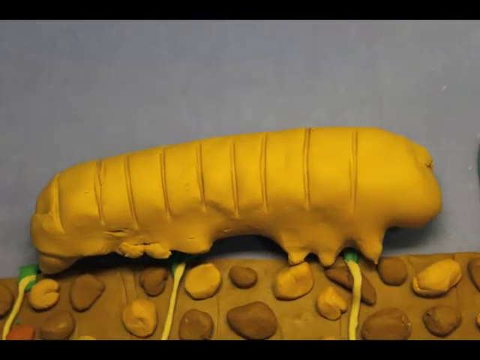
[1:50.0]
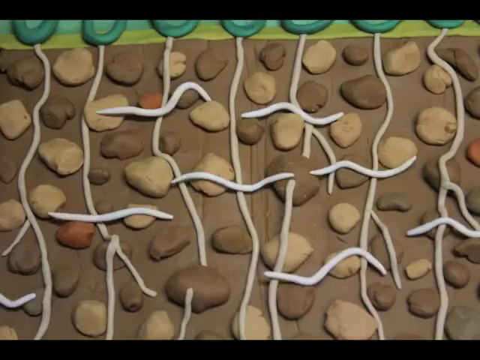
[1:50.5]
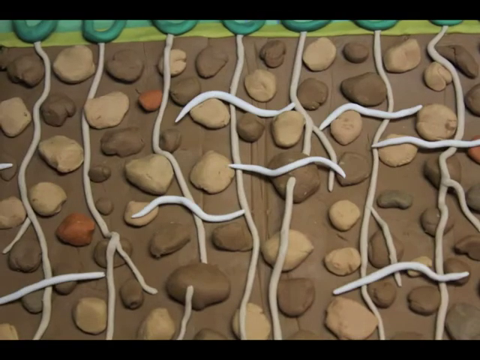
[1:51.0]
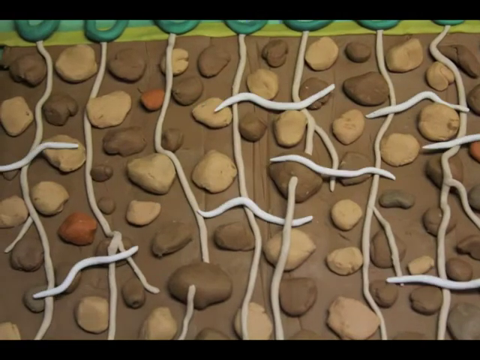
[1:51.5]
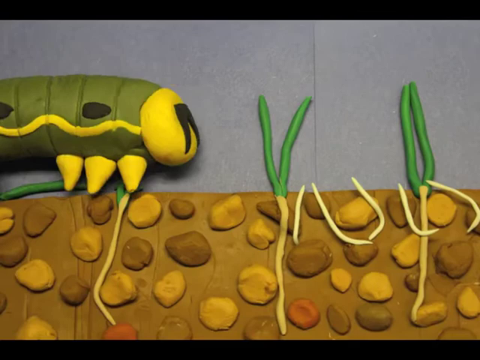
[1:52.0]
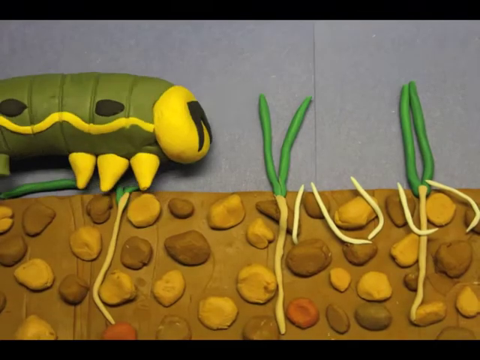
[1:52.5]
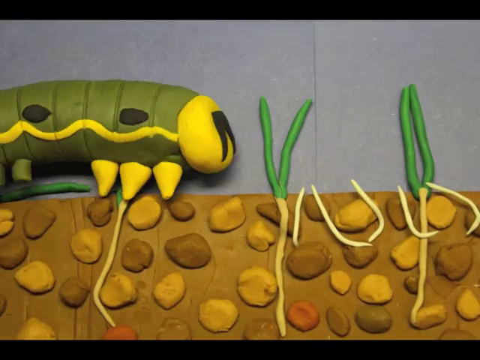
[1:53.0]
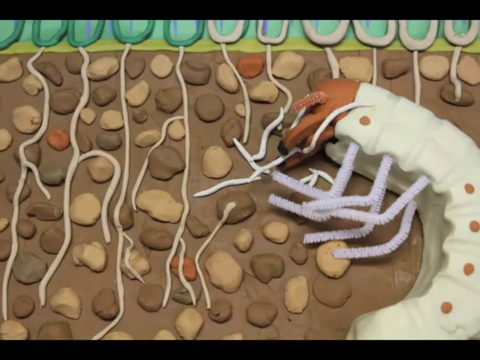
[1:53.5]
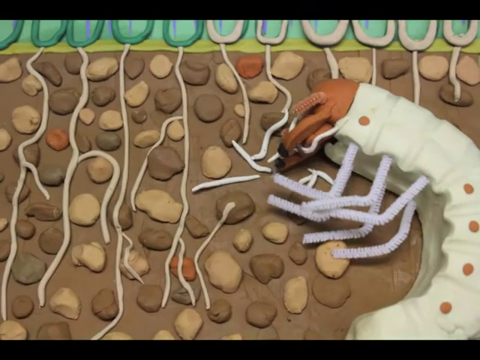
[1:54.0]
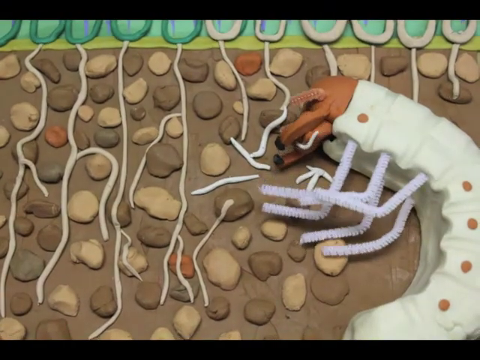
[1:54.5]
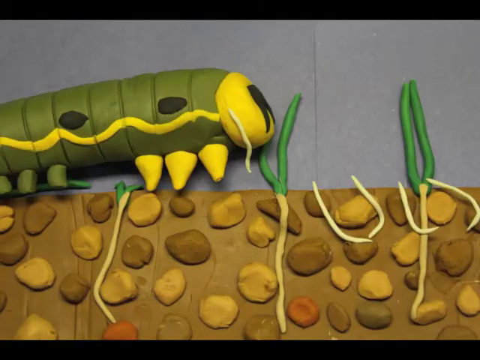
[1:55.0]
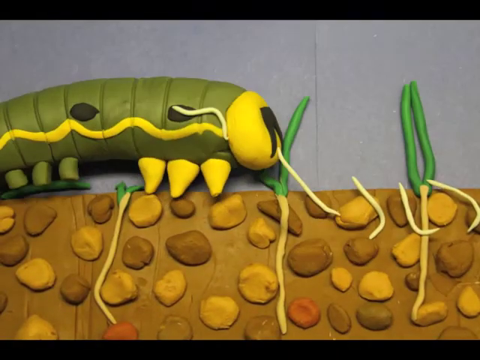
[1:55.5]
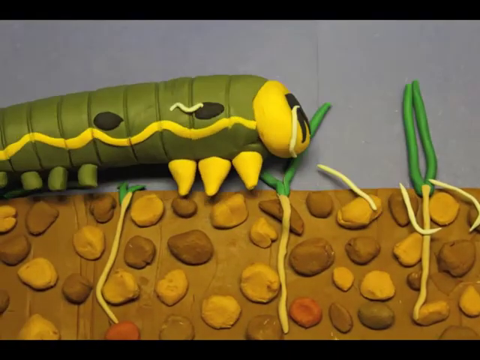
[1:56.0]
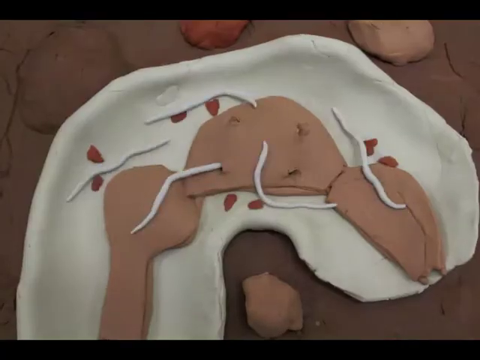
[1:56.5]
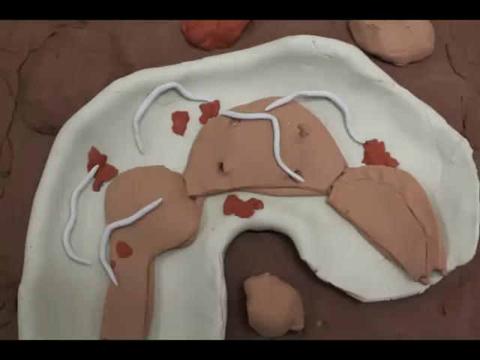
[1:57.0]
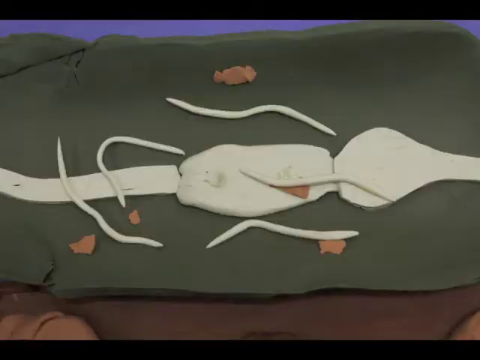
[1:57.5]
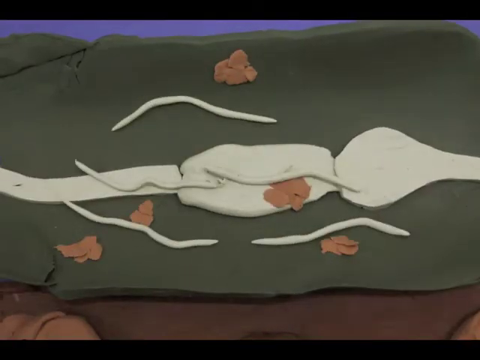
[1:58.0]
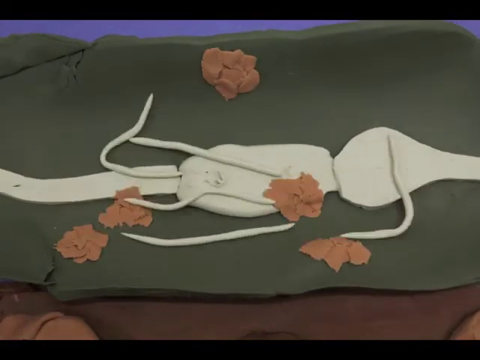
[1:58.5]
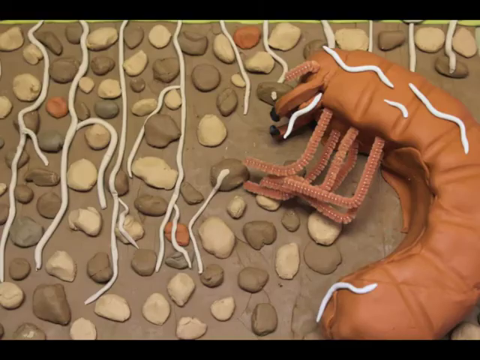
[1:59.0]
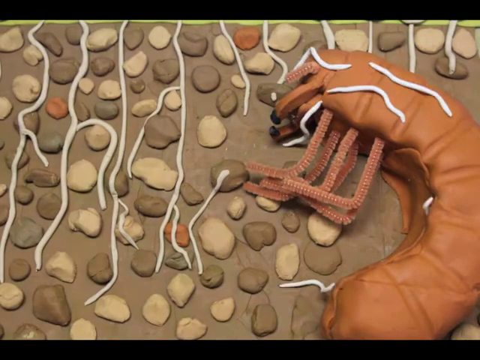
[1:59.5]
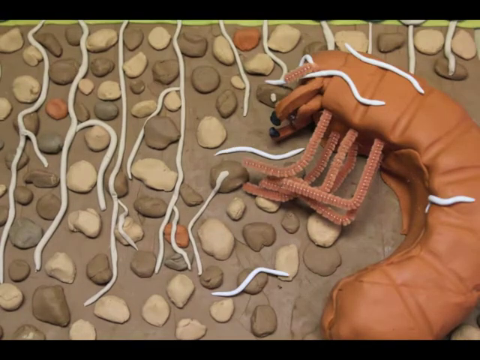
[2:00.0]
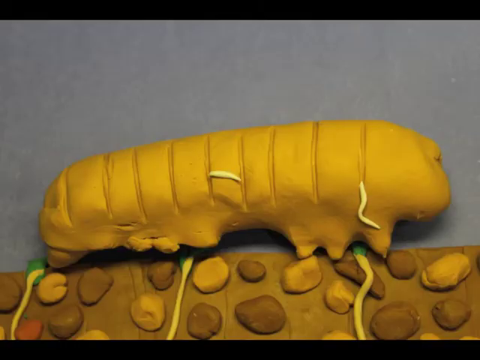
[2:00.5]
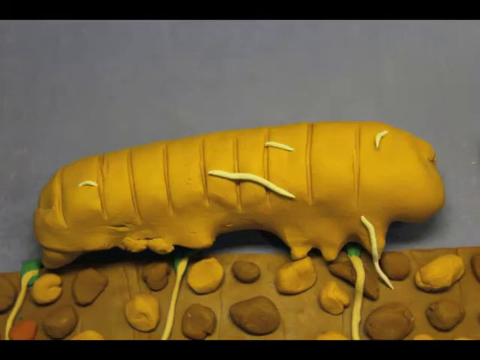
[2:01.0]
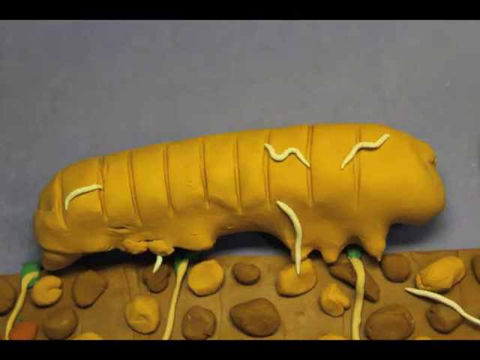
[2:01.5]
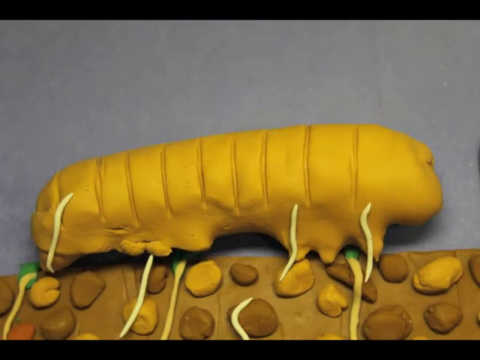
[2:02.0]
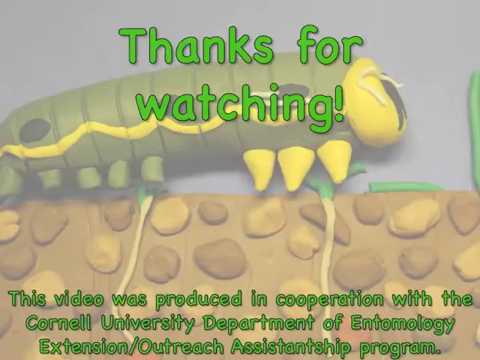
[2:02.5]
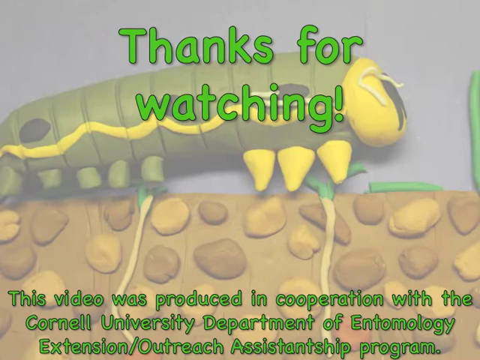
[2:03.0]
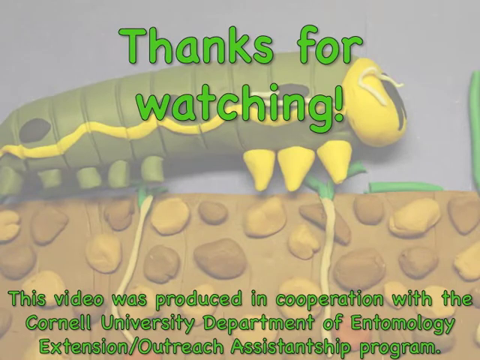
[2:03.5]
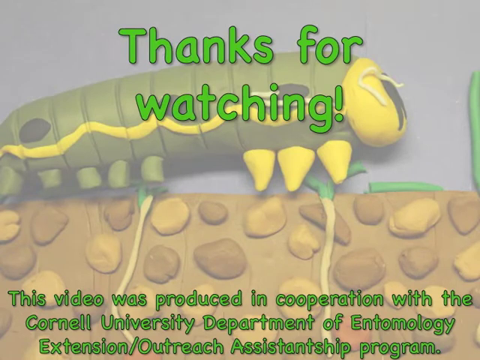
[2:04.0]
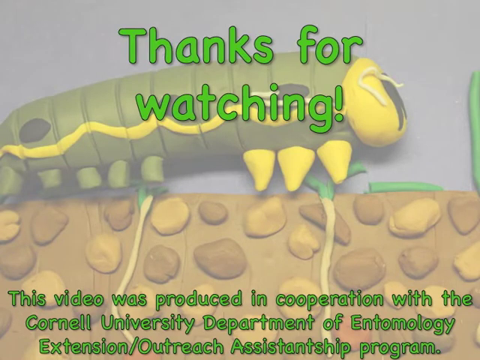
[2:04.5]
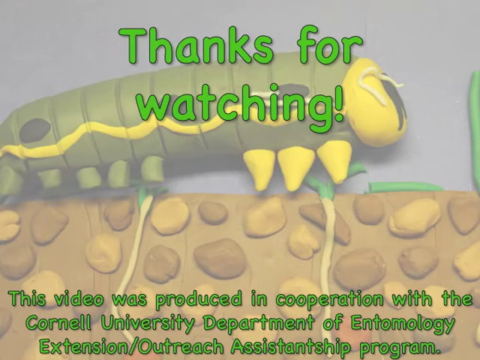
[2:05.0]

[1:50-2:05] The bird enters from the upper right of the screen, pecking at the leftovers of the dried-up dead caterpillar. The worms, or types of nematodes, crawl out of the caterpillar's carcass back into the soil, which is still dark and light brown clay mixed with beige and orange clay. The plants' roots are on screen, and the background is light blue paper depicting the sky. The worms enter the soil and move from left to right. The earlier scene of the worms entering the body of the entomopathogenic nematode and destroying the host's body is then shown once more, followed again by the worms jumping onto the caterpillar and getting into its body and digestive tract, then the worms leaving the body of the larva, and then leaving the body of the caterpillar. The video ends on a still picture of the caterpillar, with "thanks for watching" in a light green font in the upper middle of the screen and, at the bottom, "this video was produced in cooperation with the Cornell University Department of Entomology extension/outreach assistance program".